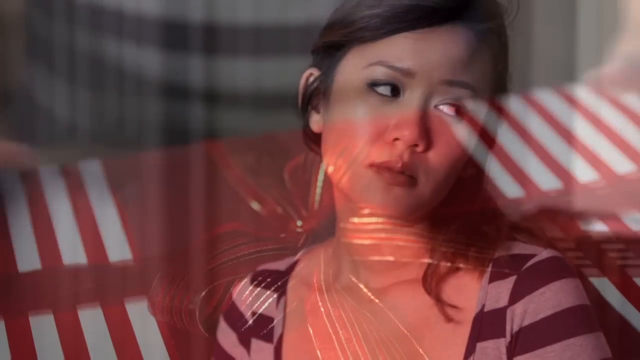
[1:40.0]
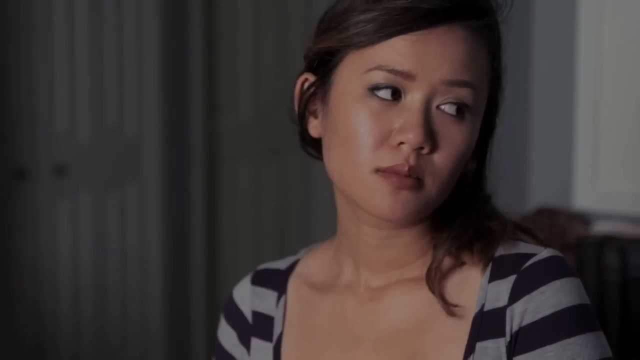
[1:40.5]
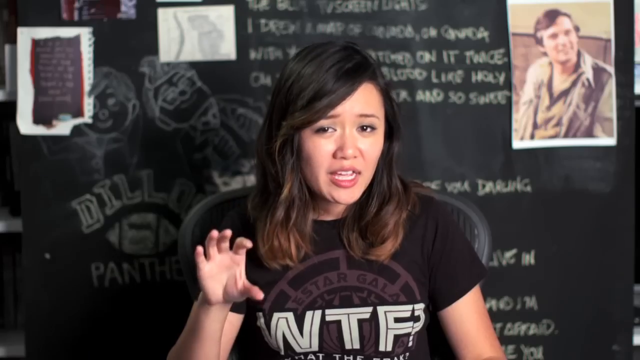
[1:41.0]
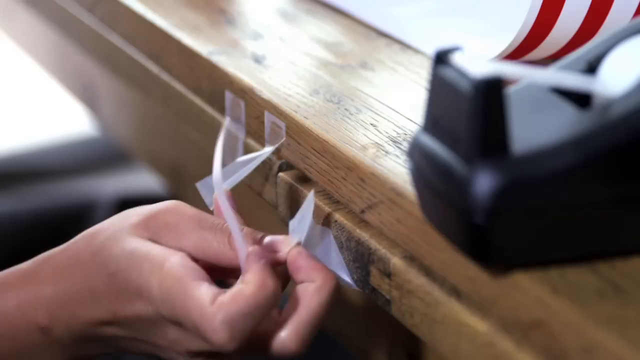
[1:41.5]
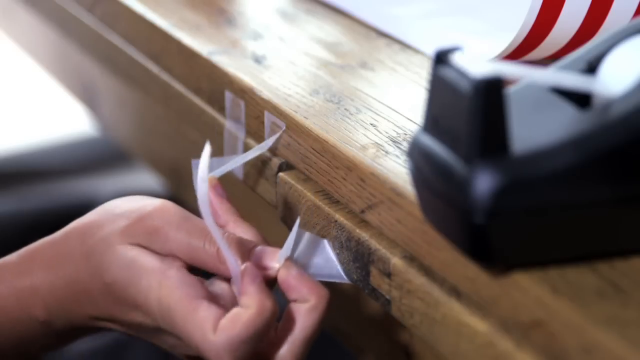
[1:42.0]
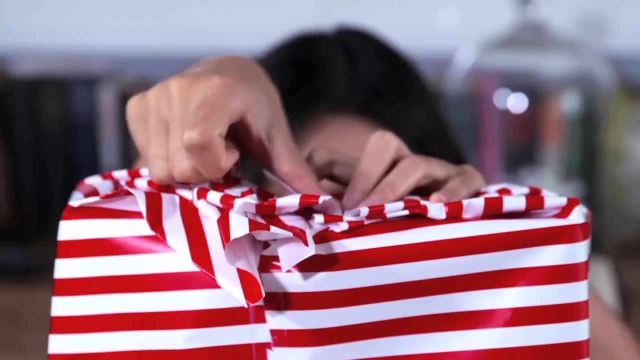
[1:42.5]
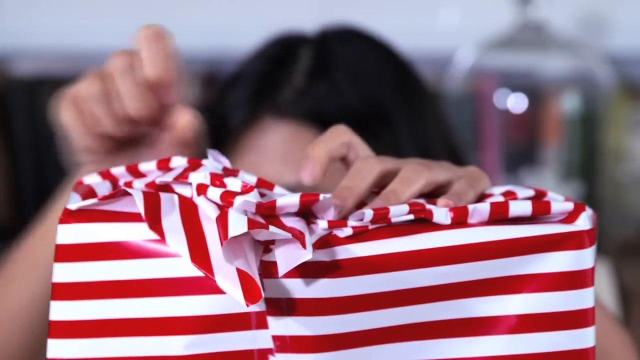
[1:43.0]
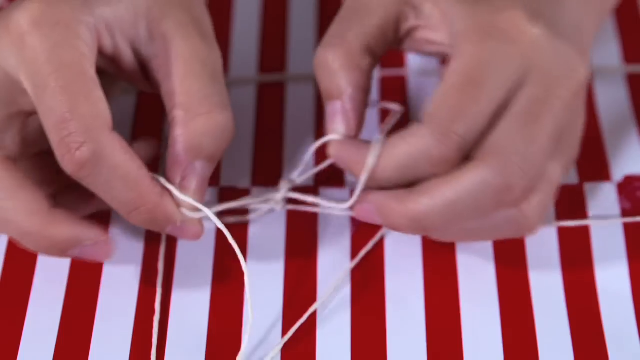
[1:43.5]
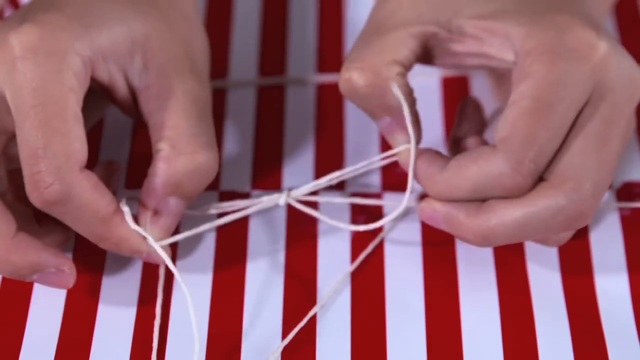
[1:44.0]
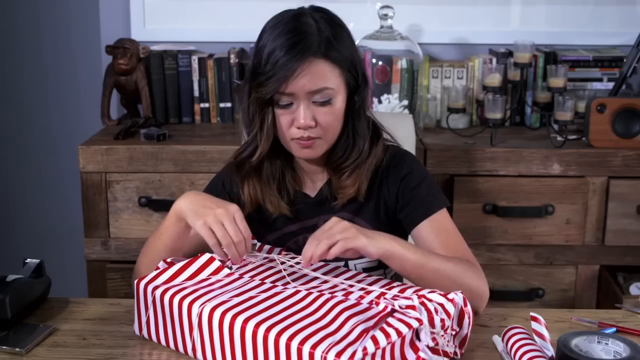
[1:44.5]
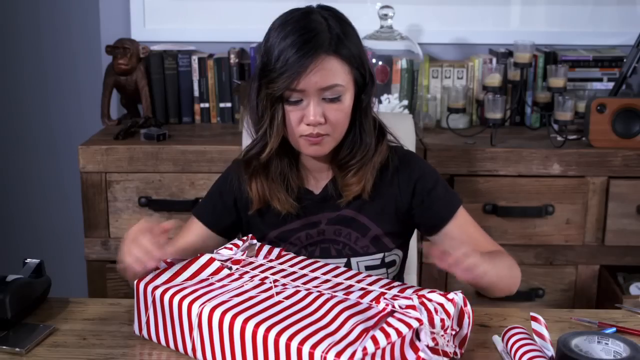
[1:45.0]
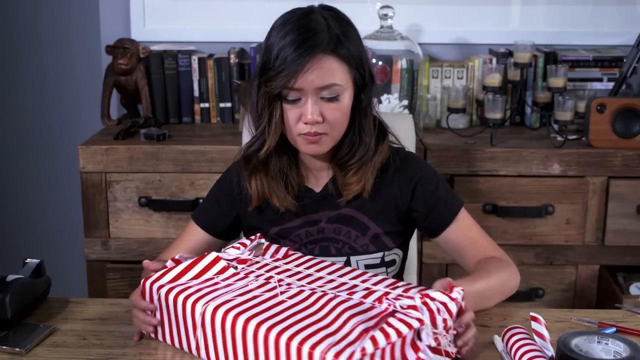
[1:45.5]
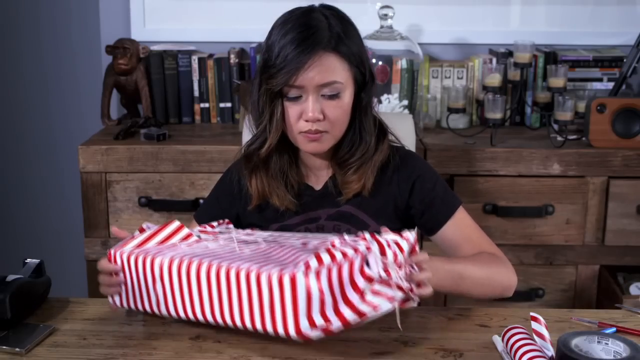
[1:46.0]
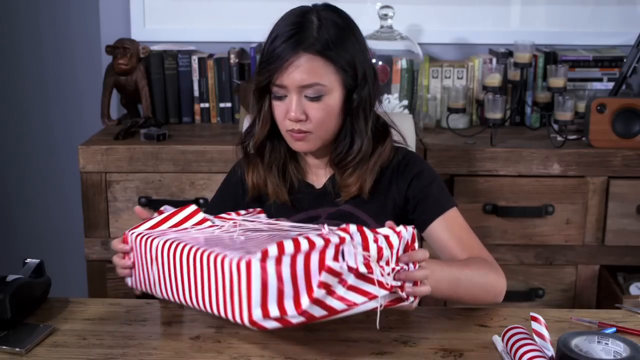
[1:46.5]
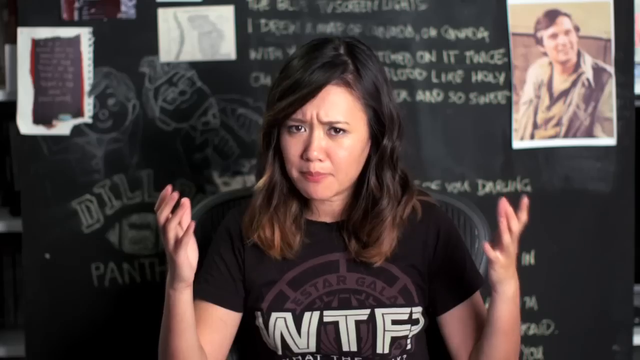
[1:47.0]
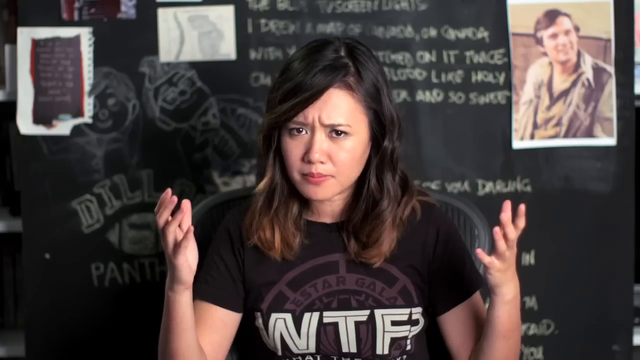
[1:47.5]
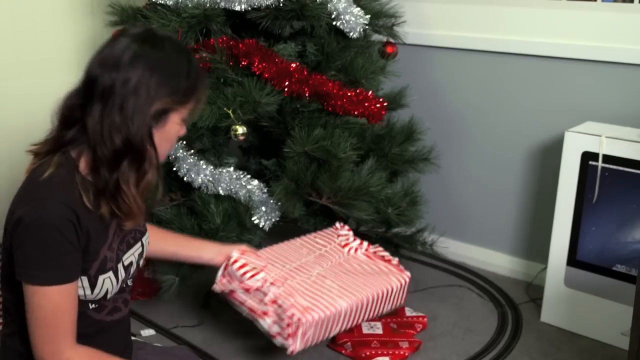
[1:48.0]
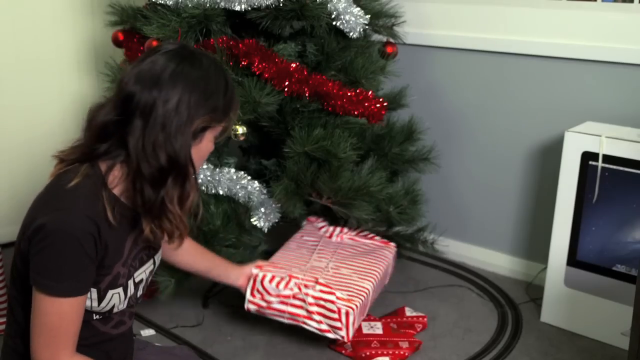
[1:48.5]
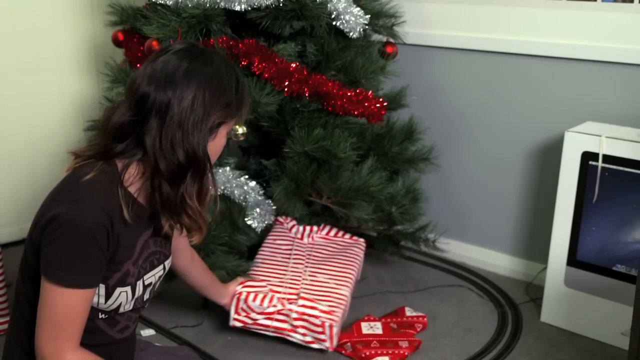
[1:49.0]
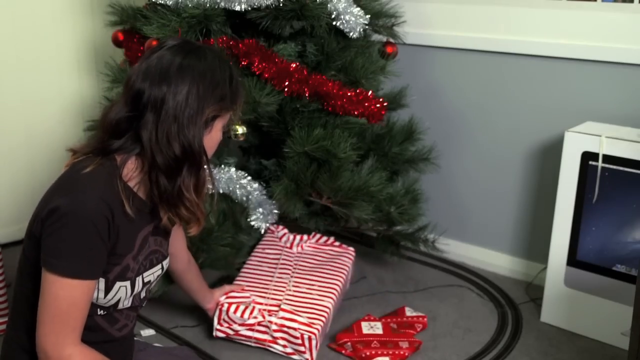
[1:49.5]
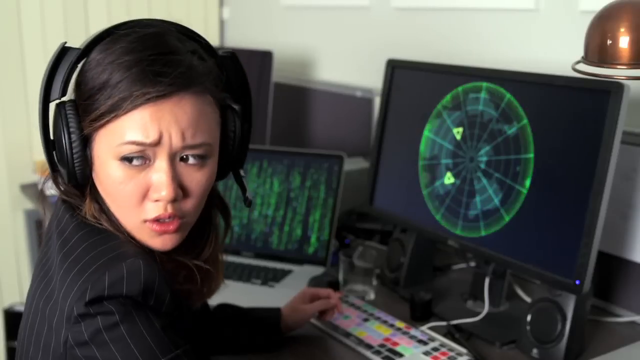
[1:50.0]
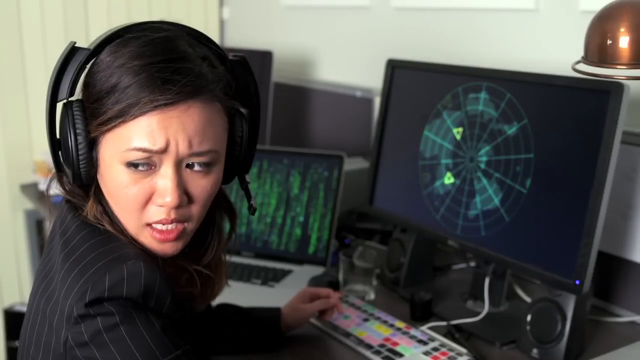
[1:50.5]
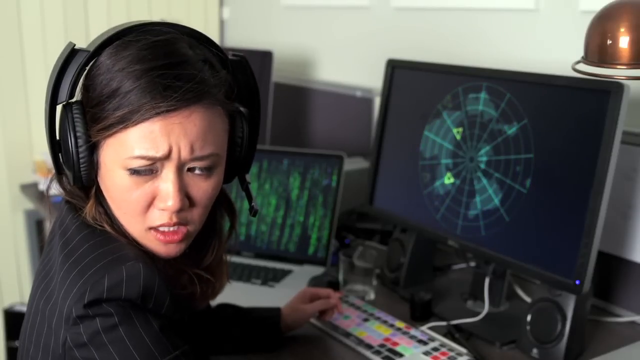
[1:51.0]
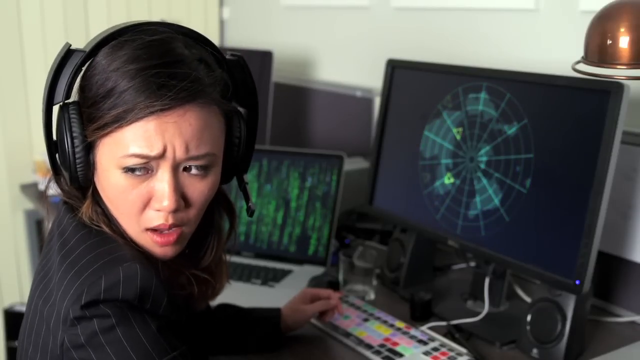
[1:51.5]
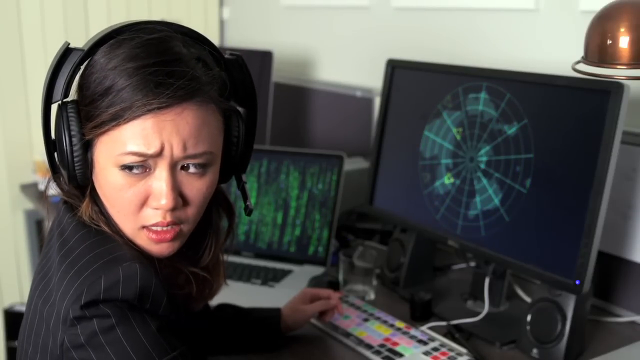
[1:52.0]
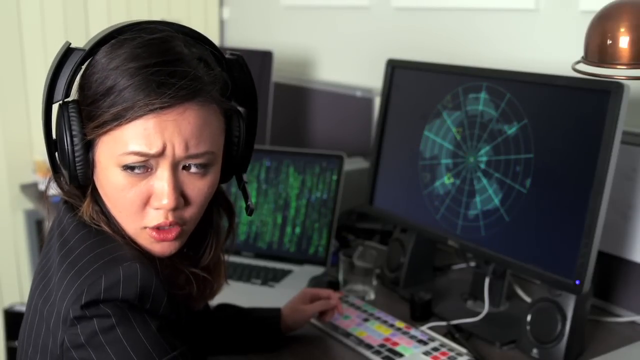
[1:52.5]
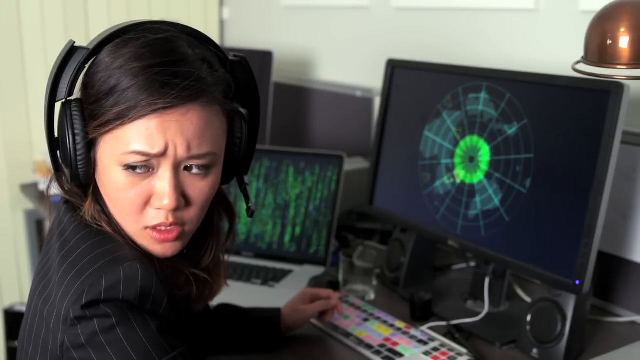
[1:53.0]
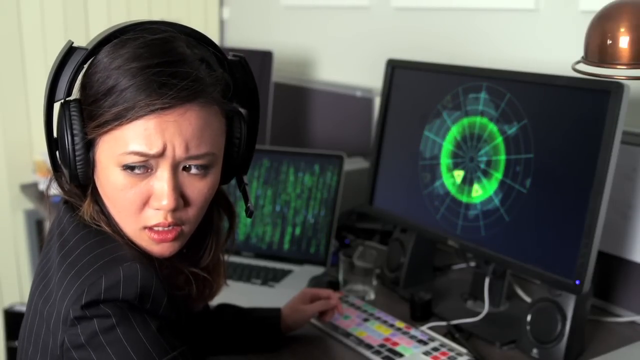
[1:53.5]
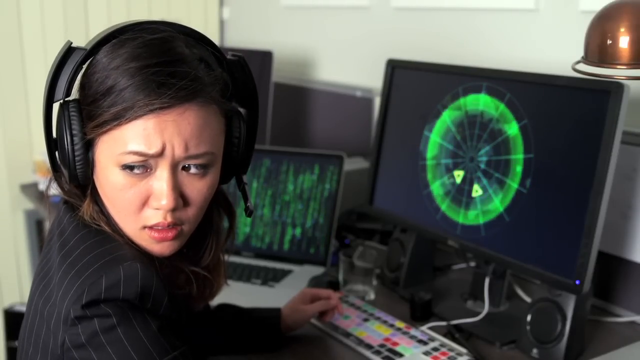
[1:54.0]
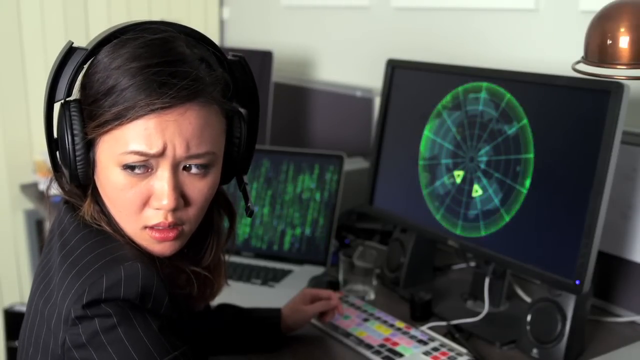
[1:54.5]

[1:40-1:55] The girl's face appears, then tape and a string around the box she is trying to wrap and put under the tree; it looks very poorly wrapped. A girl with headphones on is at a computer, with the computer in front of her, but she is looking back. A very messy package, kind of taped messily and tied with a string, is put under a tree. The girl with headphones looks backward with the computer screen in front of her. The screen has a circle on it that looks like a map, and a bright green kind of goes across it. The poor wrapping and placing of the gift under the tree is shown again. The girl looking back looks troubled, her eyebrows kind of raised and squished together. Another computer screen, kind of lower, is next to the first one; she is sort of in front of it, so it cannot be seen well. "YouTube" and the other items remain at the bottom right-hand side, and the pause and sound buttons at the bottom left-hand side.